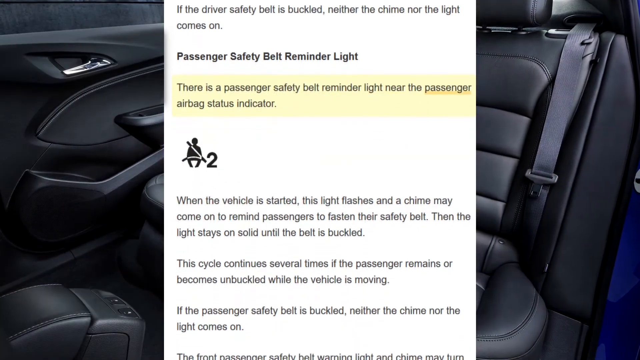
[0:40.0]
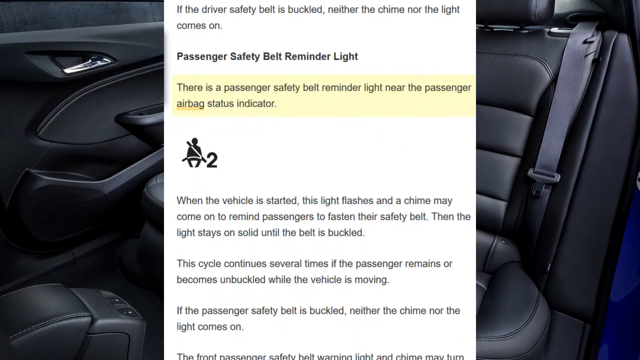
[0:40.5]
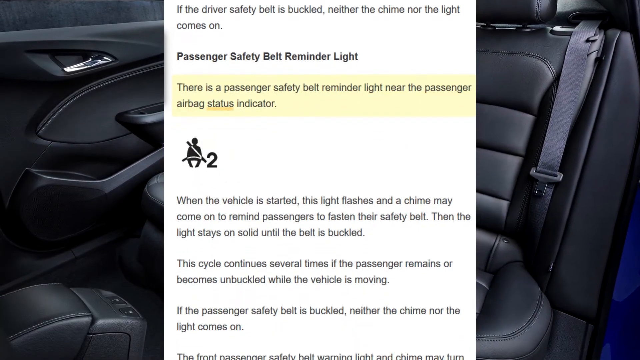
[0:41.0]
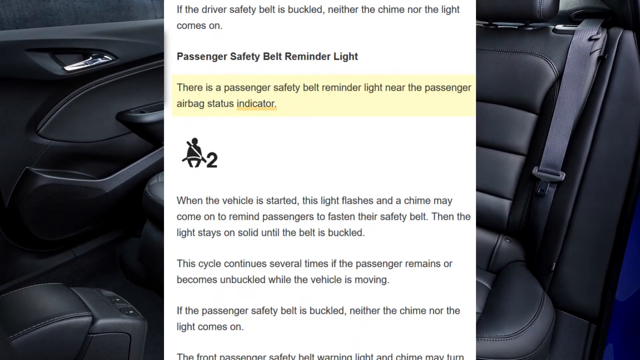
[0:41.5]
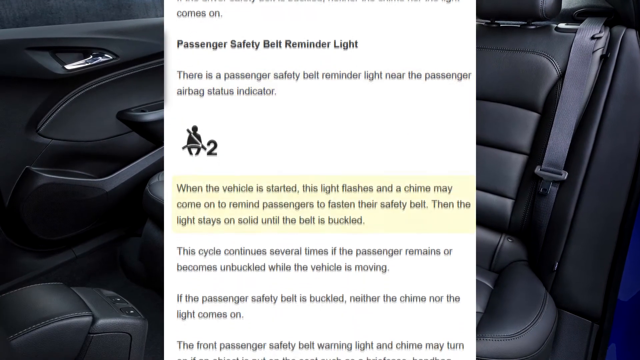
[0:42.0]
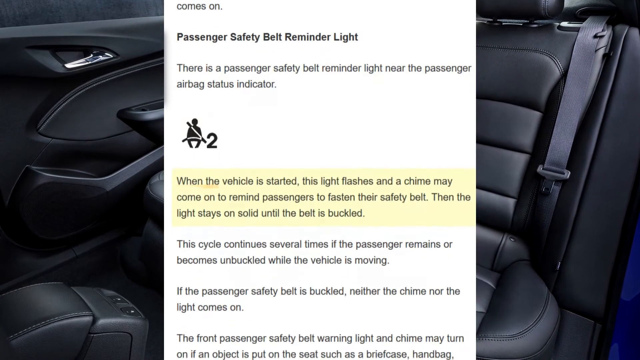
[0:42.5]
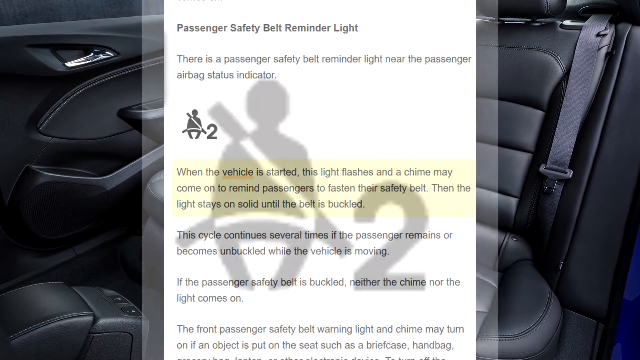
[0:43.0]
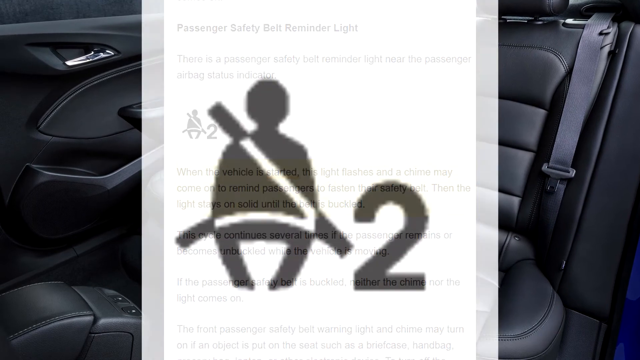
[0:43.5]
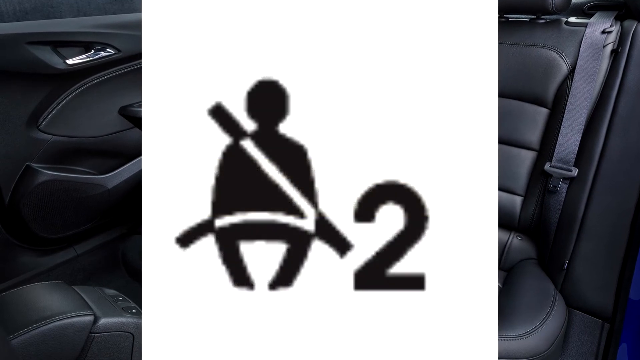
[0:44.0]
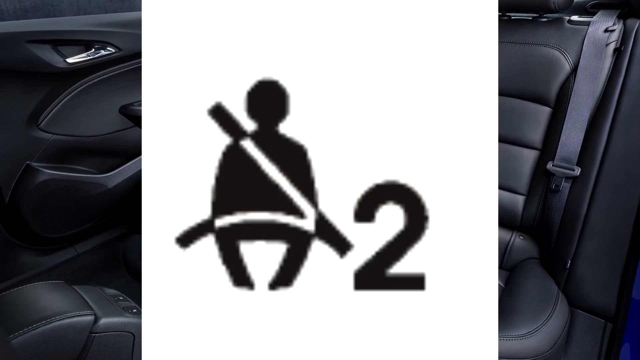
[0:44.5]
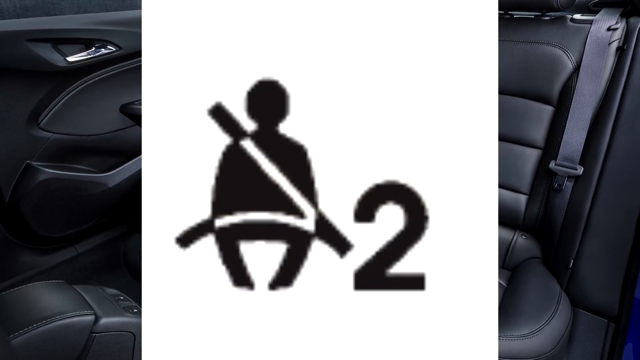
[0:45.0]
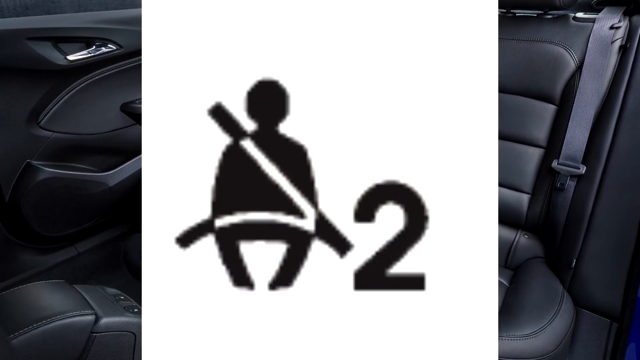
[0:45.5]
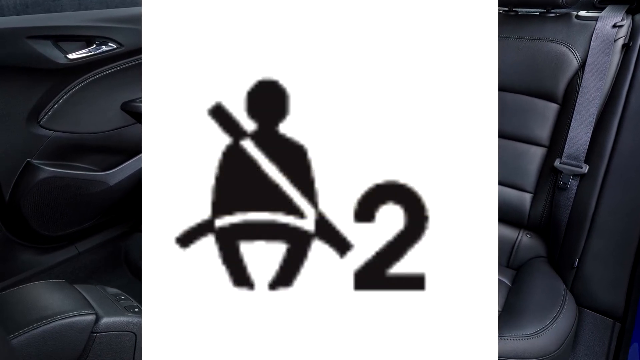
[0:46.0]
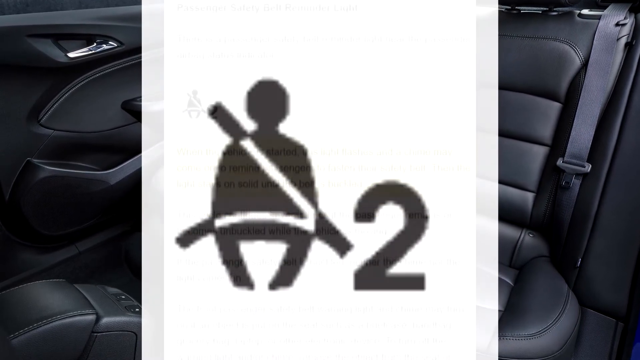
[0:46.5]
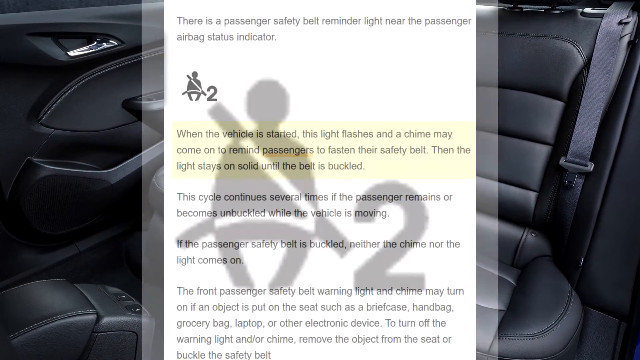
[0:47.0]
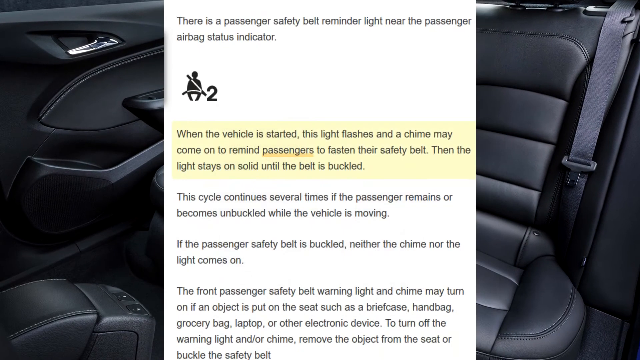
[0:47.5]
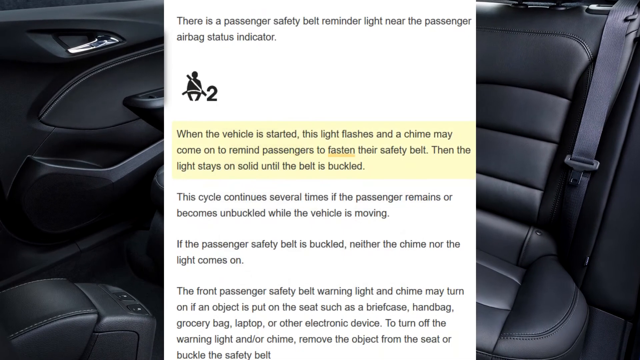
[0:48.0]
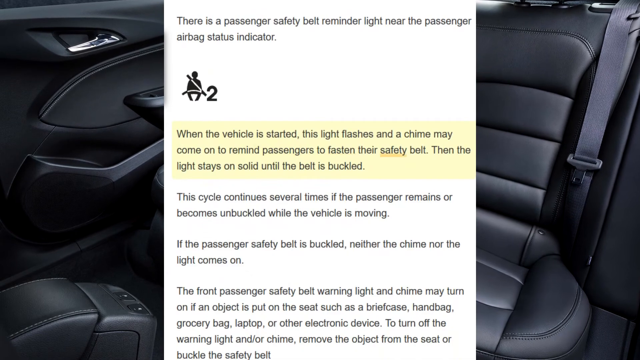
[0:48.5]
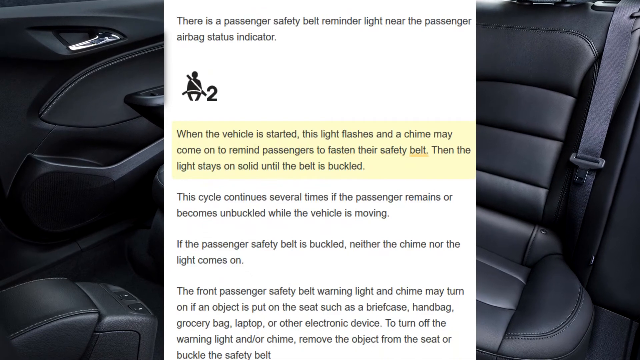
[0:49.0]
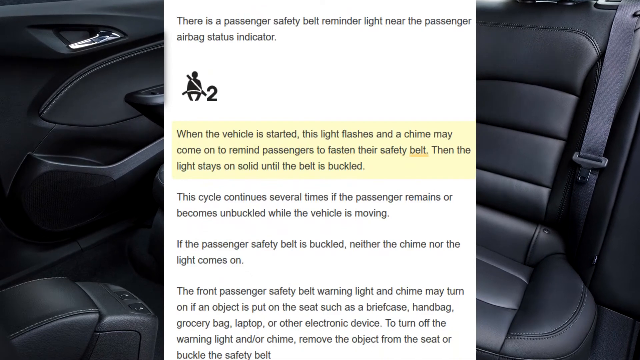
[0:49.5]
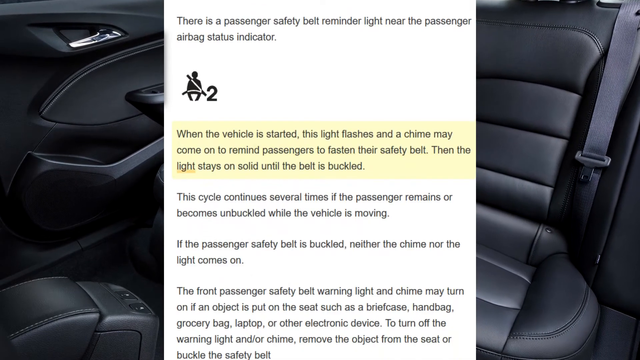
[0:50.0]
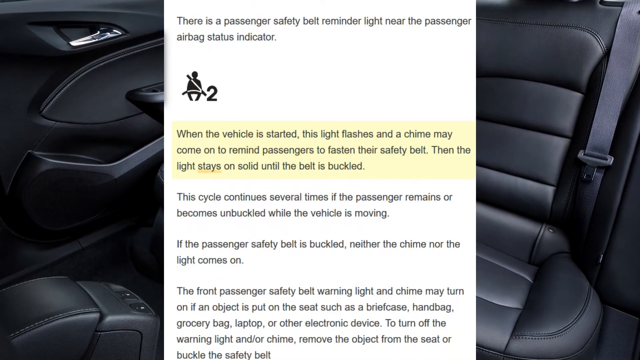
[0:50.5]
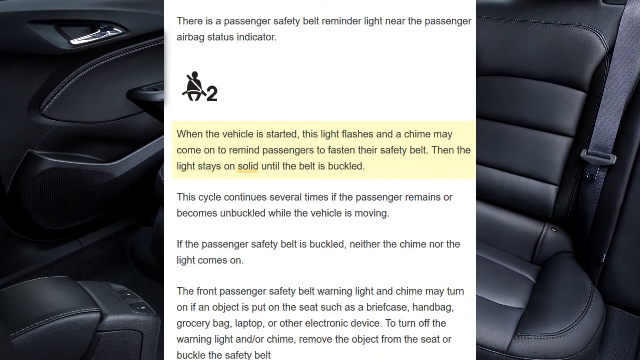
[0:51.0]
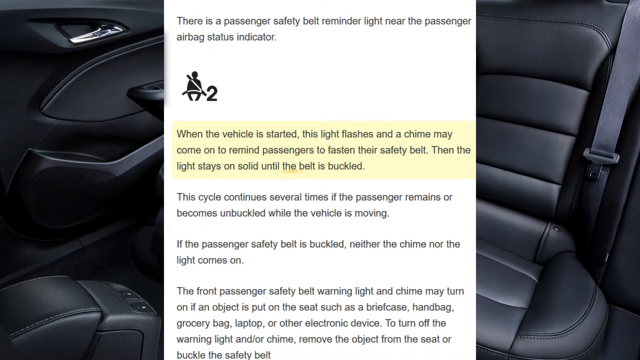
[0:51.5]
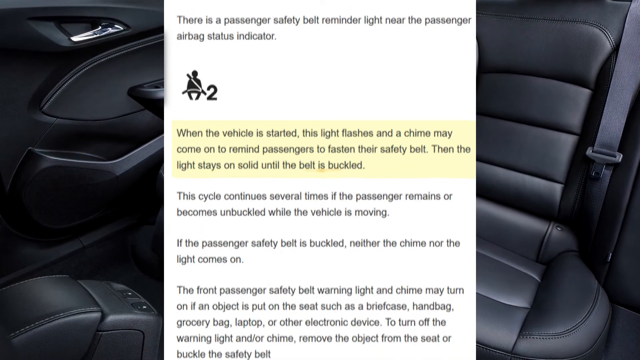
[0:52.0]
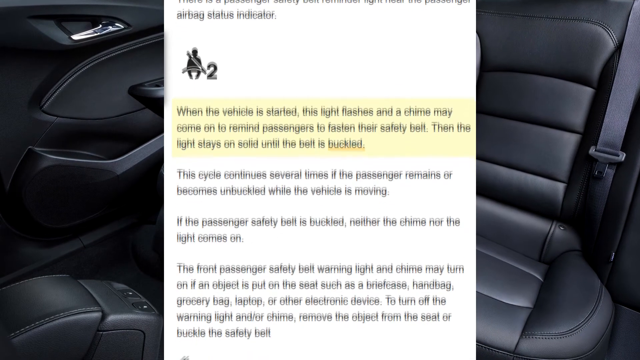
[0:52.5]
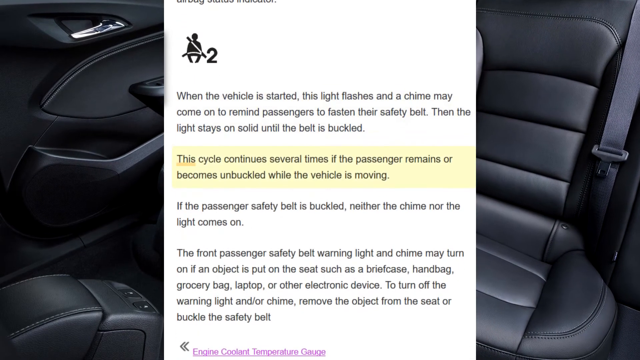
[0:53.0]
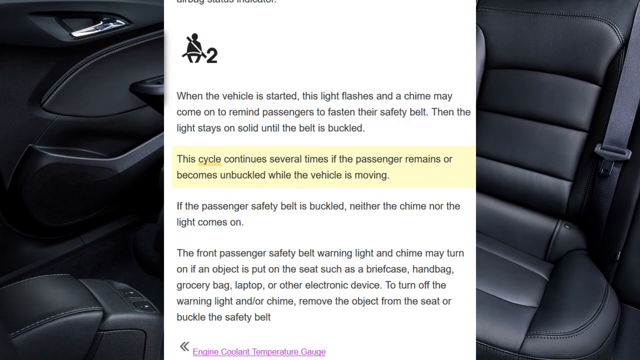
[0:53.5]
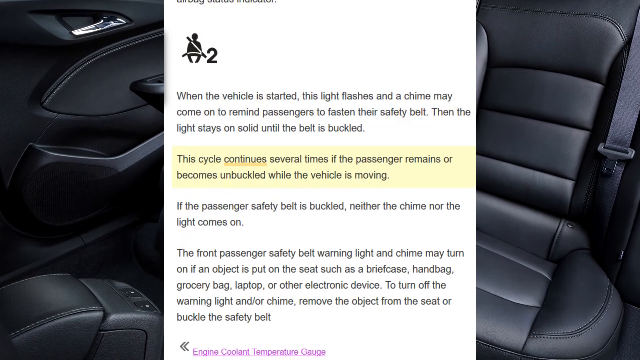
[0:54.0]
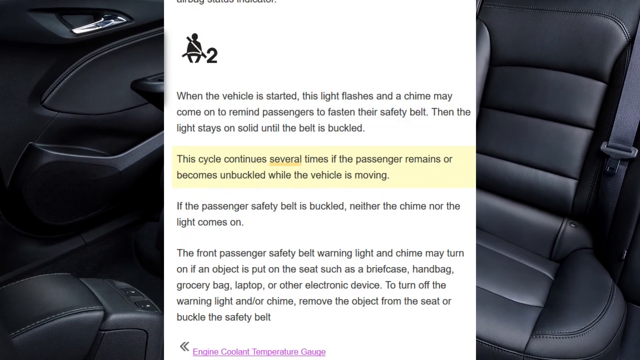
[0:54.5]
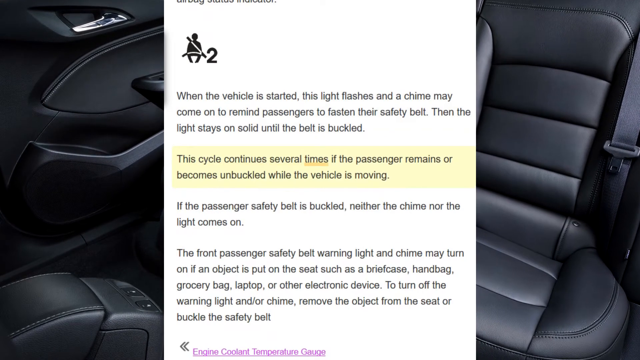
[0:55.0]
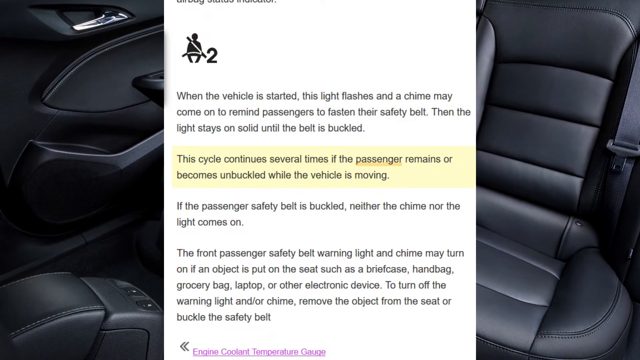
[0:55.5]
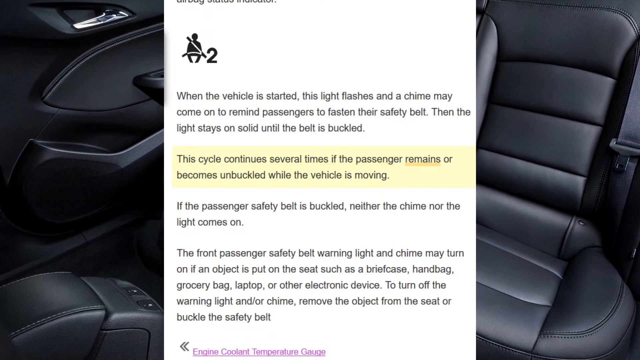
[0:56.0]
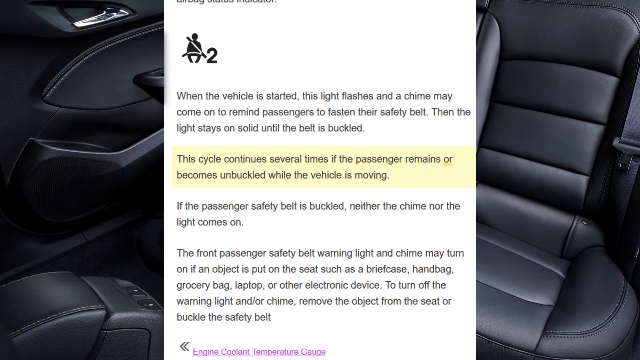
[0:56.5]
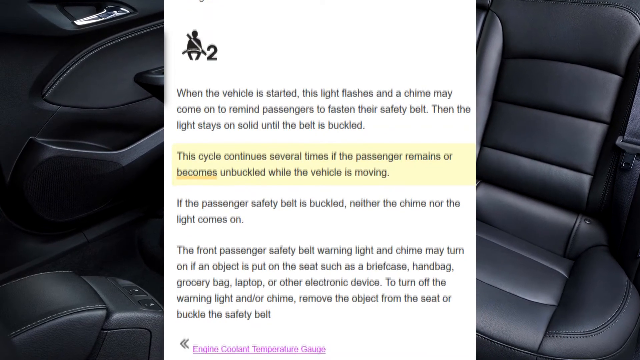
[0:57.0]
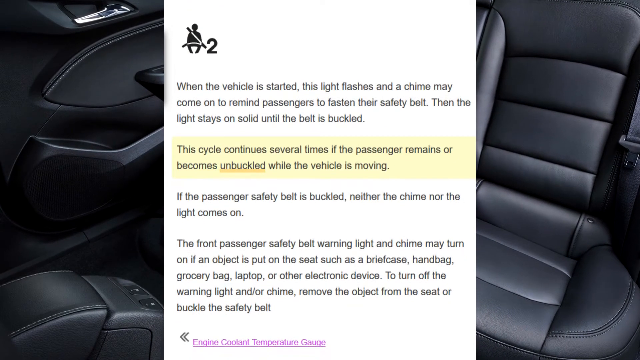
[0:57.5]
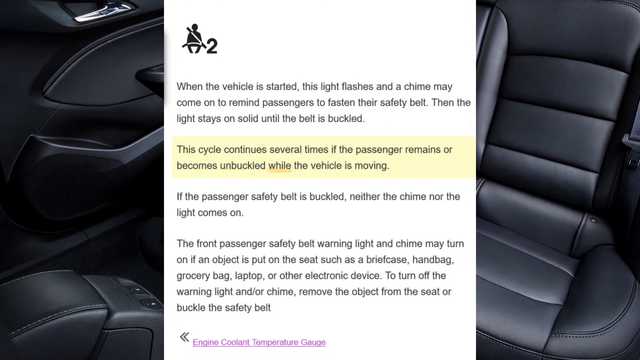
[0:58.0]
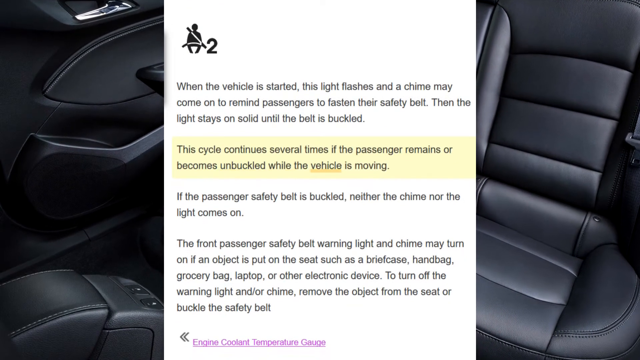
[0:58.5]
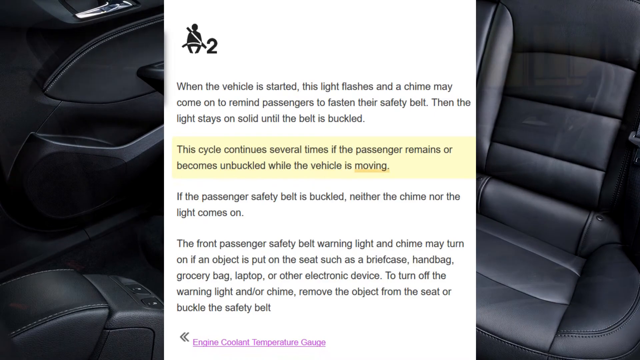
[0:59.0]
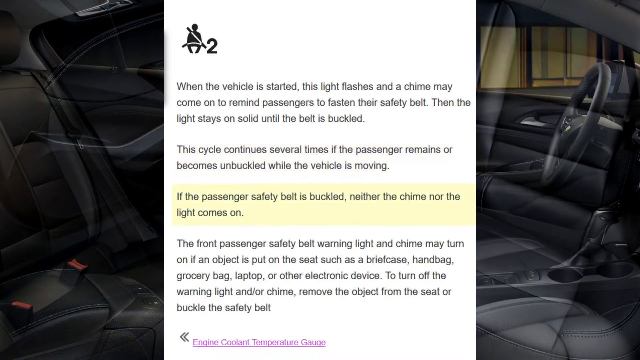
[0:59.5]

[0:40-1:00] The passenger safety belt reminder light section continues. The background shows a car's interior with a black leather seat and a door. At first more text is on the screen, then the white screen in the center changes to a white and black icon of a human with a seat belt across them, with the number "2" to its right. It then goes back to text reading "when the vehicle is started this light flashes and a chime may come on to remind passengers to fasten their safety belt. Then the light stays on until the belt is buckled." The text follows the same format, highlighted in yellow and then underlined word by word with an orange line. The first three parts of the text are exactly the same as the earlier driver section, and the scene ends after the third section is highlighted.